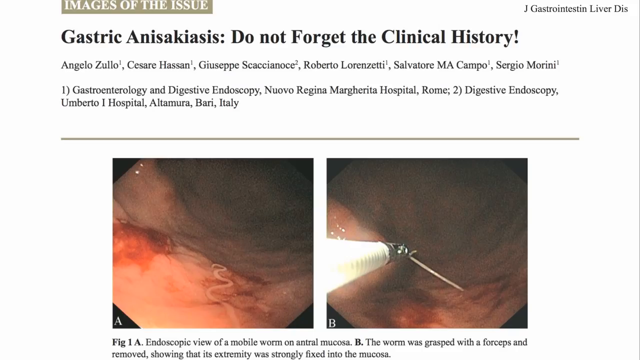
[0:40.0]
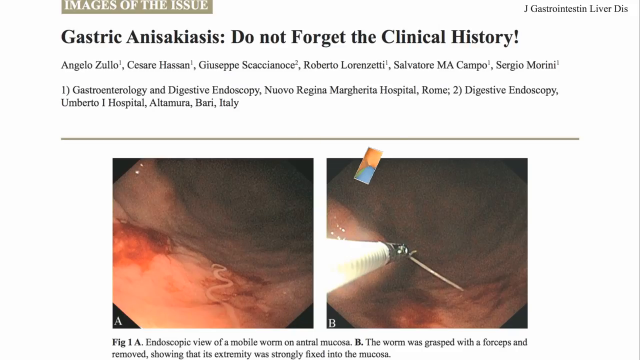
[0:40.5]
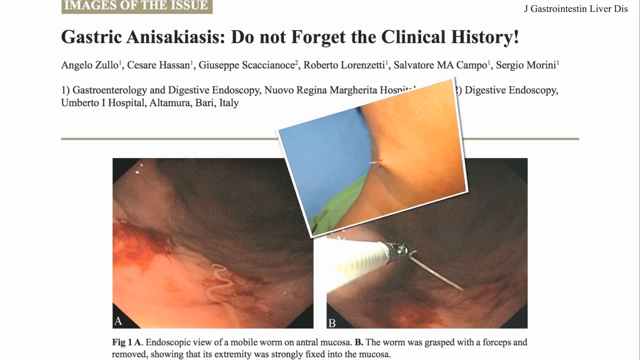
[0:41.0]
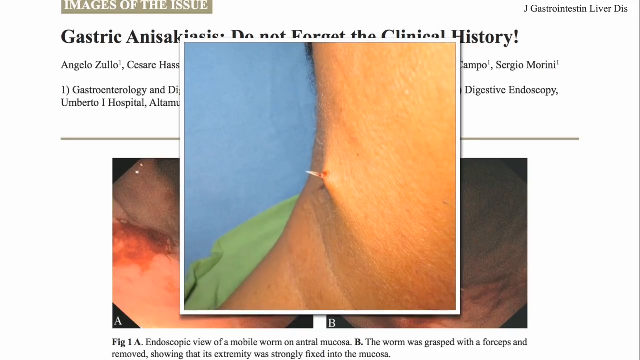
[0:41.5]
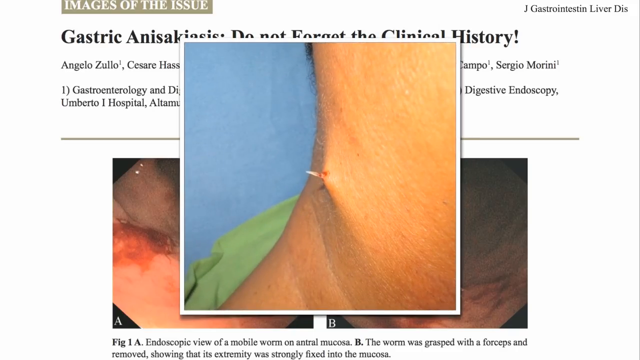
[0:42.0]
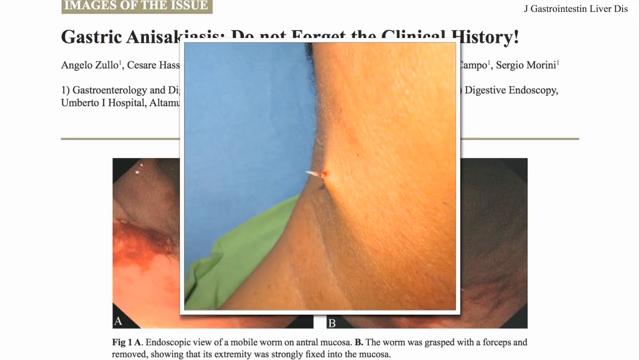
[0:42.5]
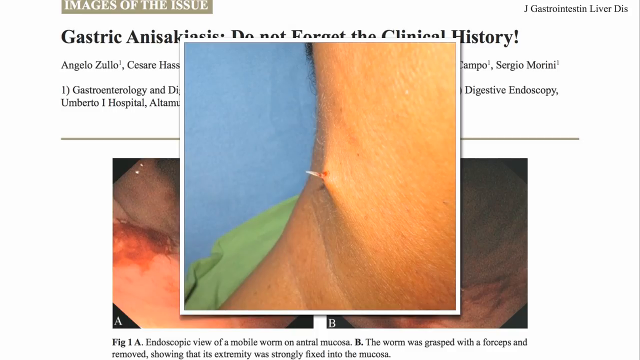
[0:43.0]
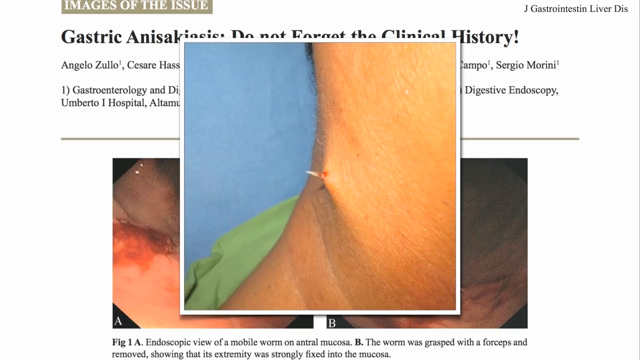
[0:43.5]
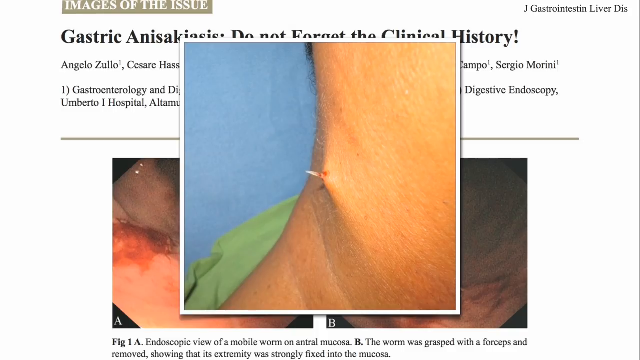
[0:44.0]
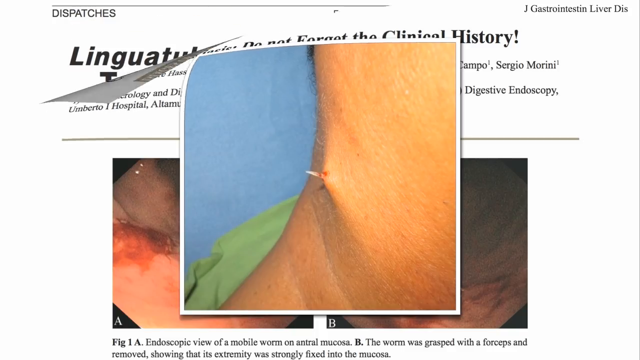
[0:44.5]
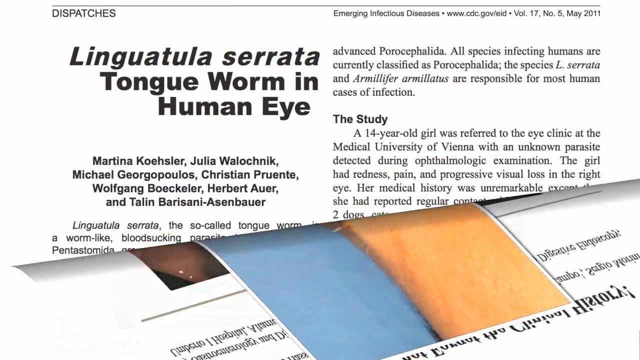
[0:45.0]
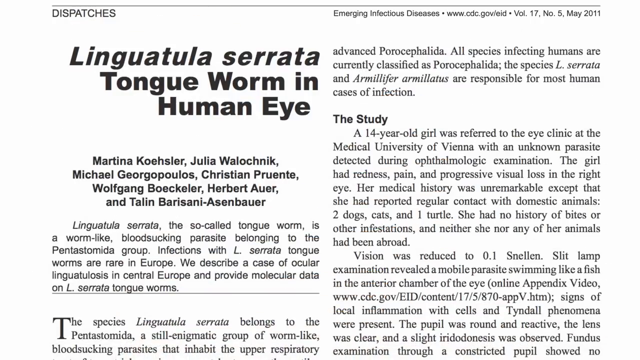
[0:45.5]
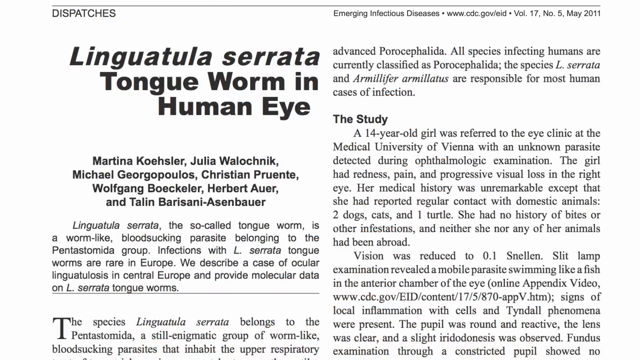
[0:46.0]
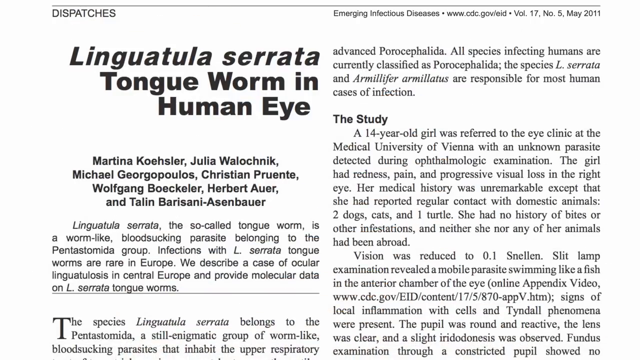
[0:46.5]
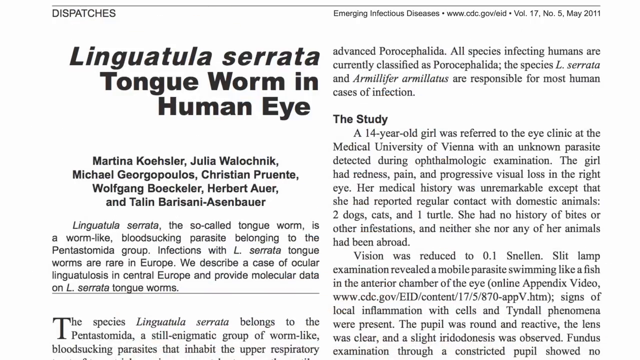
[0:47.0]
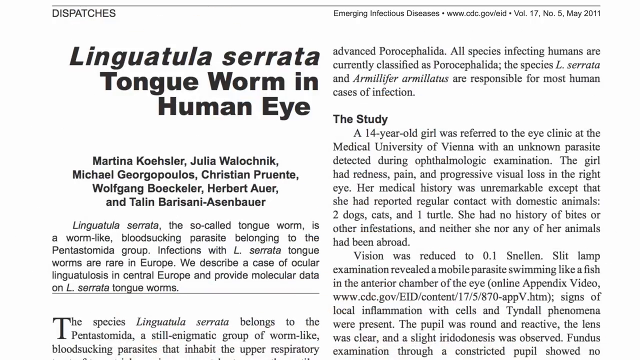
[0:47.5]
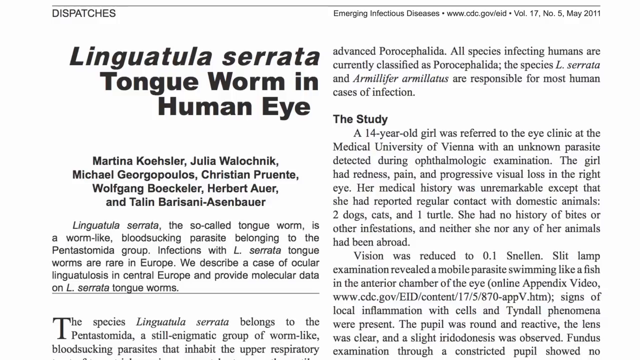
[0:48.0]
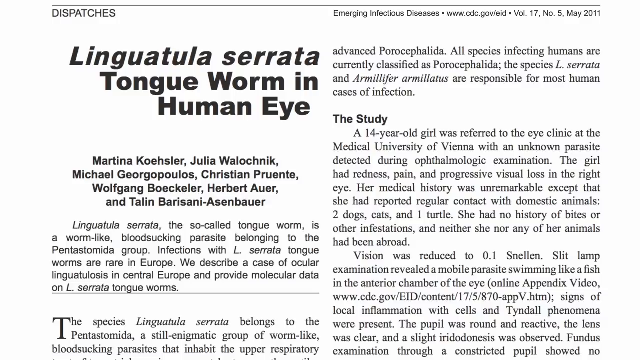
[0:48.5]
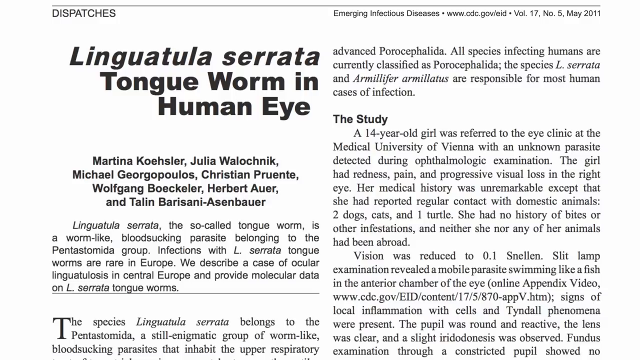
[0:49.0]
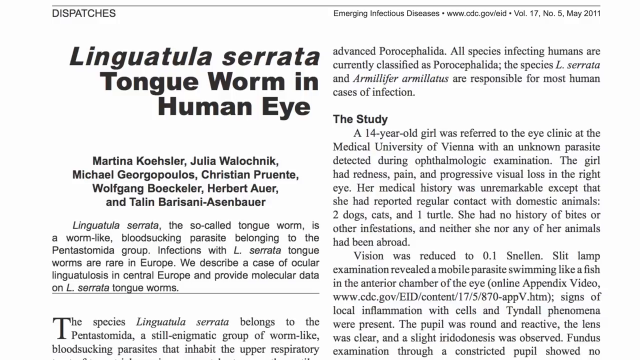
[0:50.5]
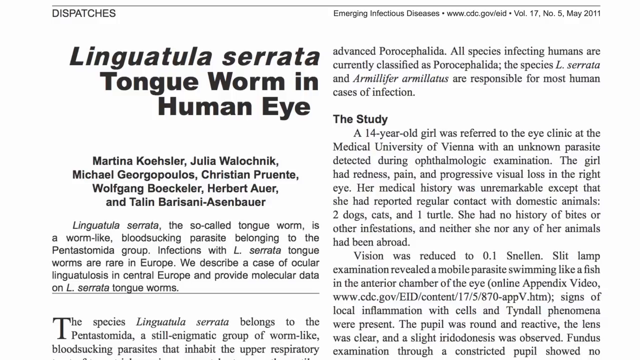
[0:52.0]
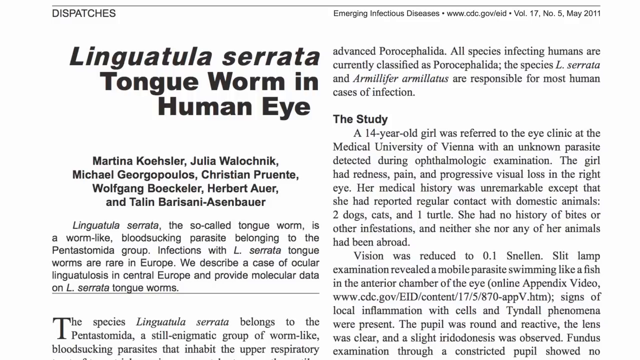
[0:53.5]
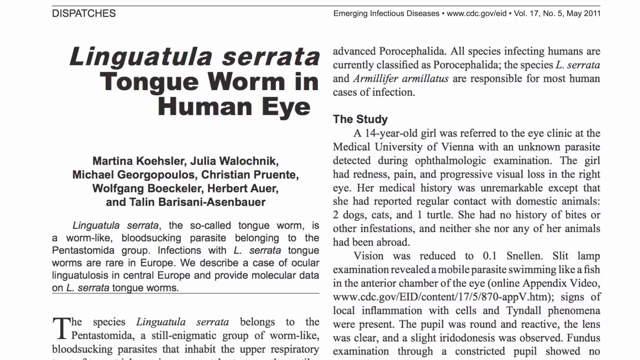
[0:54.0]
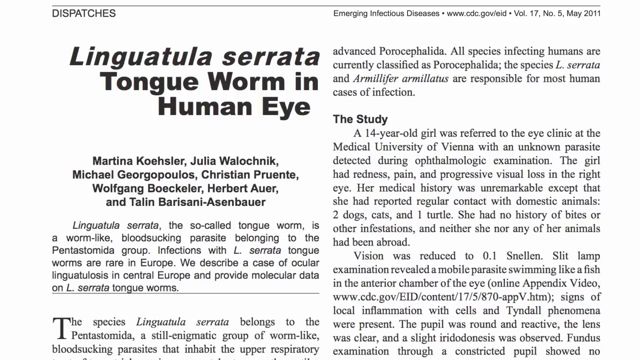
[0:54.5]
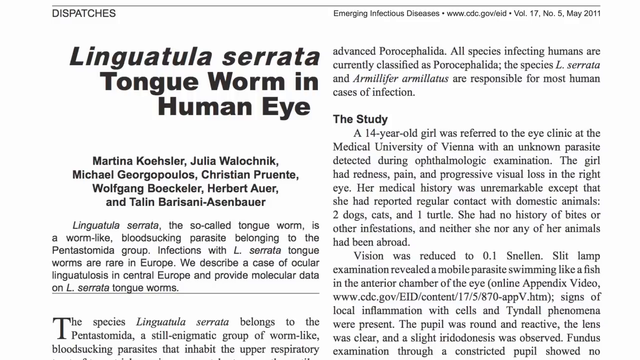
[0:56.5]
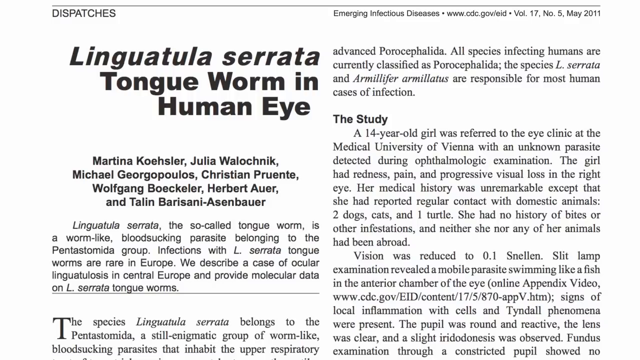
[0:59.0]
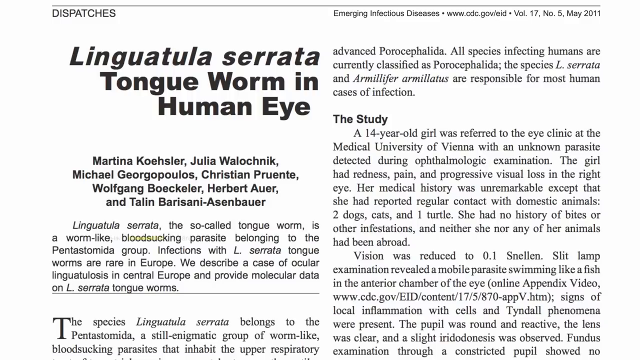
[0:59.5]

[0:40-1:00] An article shows two photos of the inside of the human body, appearing to be a tunnel way of some sort with a mucous membrane. The words "image of the issue" and "do not forget the clinical history" are at the top of the page. Another photo pops up on the screen that appears to show a needle sticking out of somebody's neck from the inside. Next, an article reads: "Tongue worm in human eye. The so-called tongue worm is a worm-like blood-sucking parasite belonging to the group. Infections with tongue worms are rare in Europe." It continues: "A 14-year-old girl was referred to the eye clinic at the Medical University of Vienna with an unknown parasite detected during ophthalmologic examination. This girl had redness, pain, and progressive visual loss in the right eye. Her medical history was unremarkable except that she had reported regular contact with domestic animals, two dogs, cats, and one turtle. She had no history of bites or other infestations, and neither she nor any of her animals had been abroad. Vision was reduced to 0.1 Snellen. Slit lamp examination revealed"